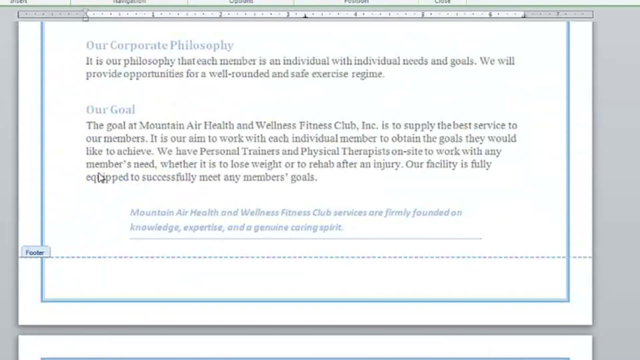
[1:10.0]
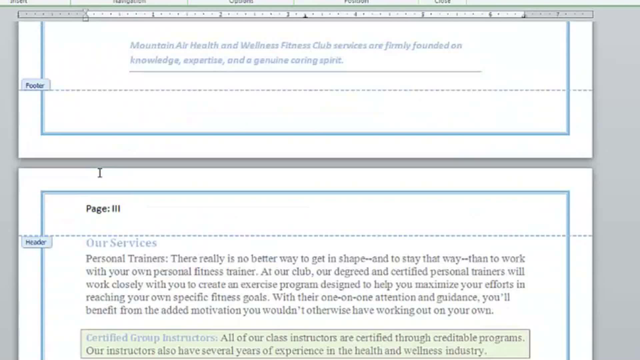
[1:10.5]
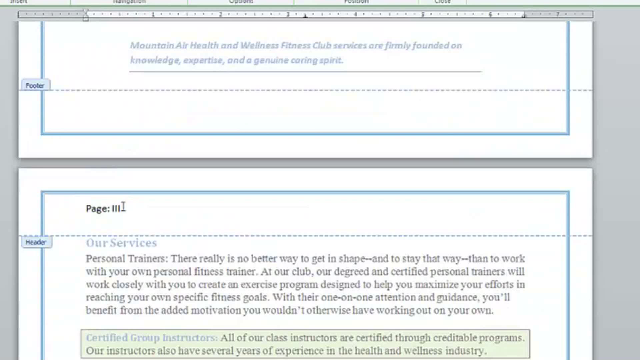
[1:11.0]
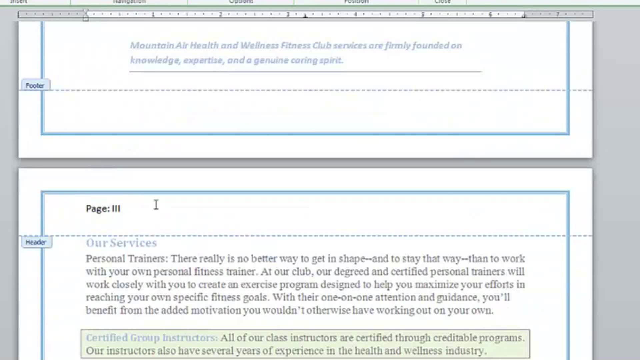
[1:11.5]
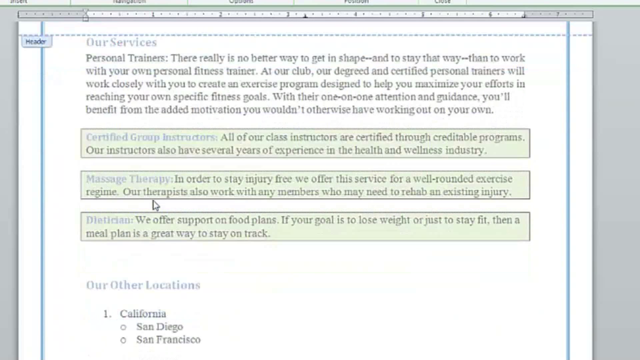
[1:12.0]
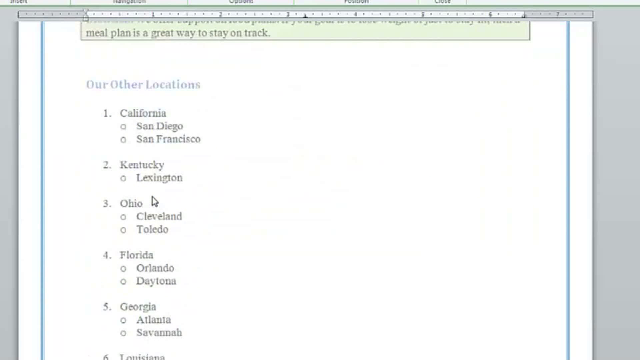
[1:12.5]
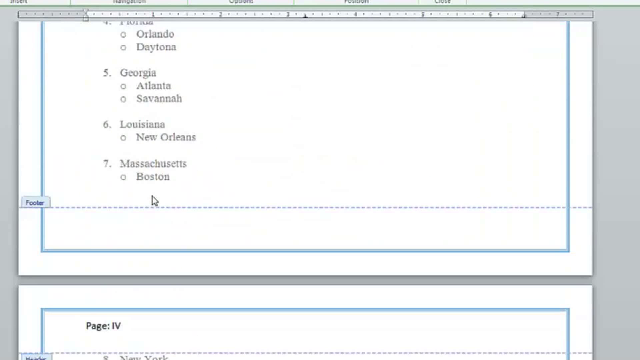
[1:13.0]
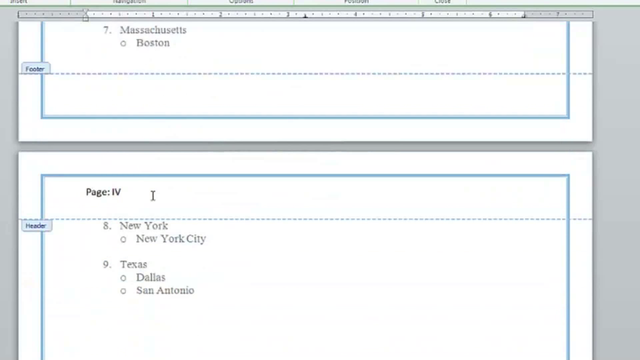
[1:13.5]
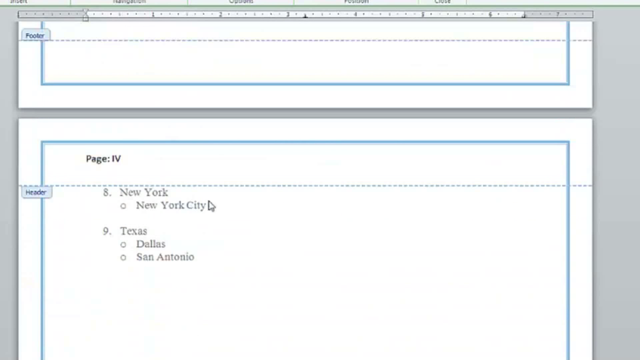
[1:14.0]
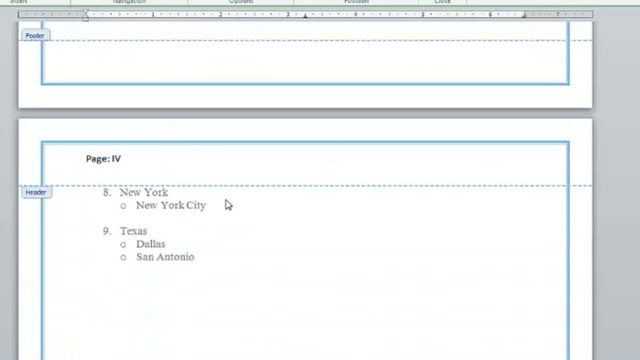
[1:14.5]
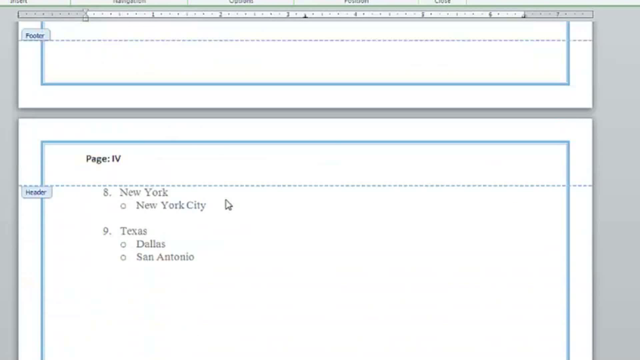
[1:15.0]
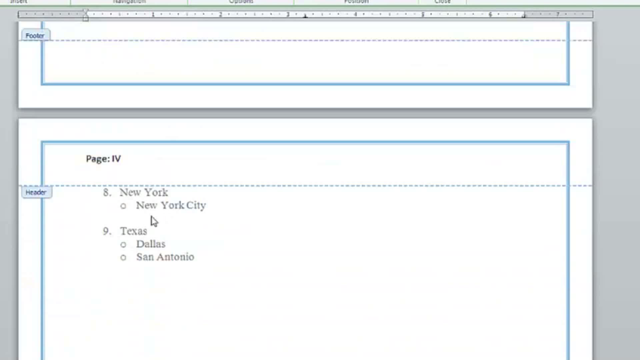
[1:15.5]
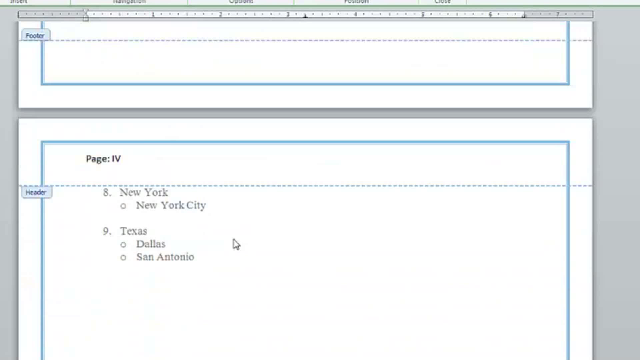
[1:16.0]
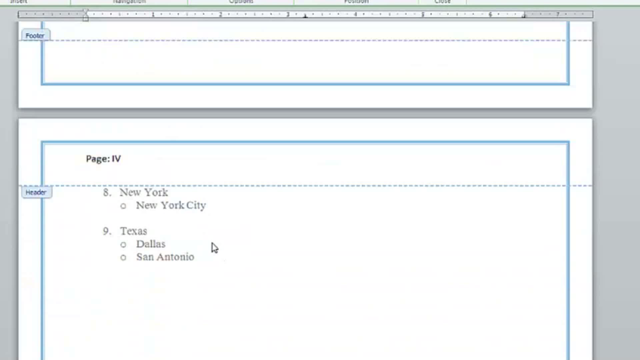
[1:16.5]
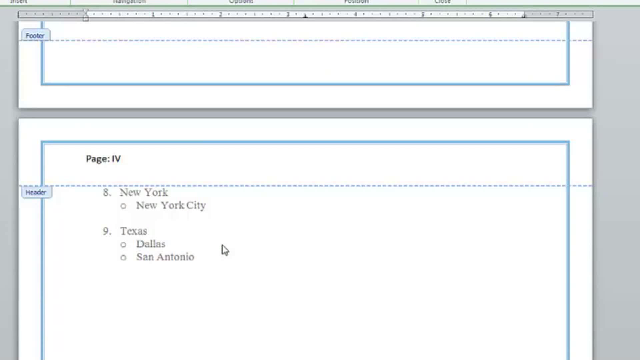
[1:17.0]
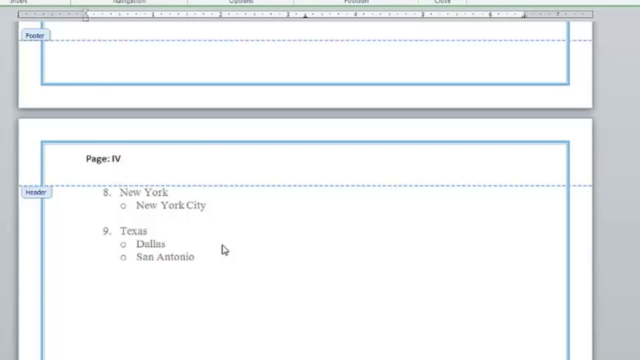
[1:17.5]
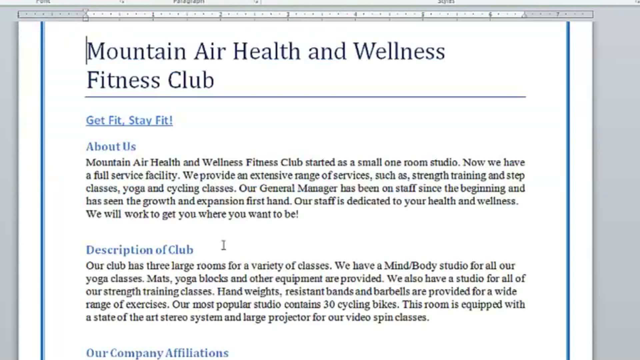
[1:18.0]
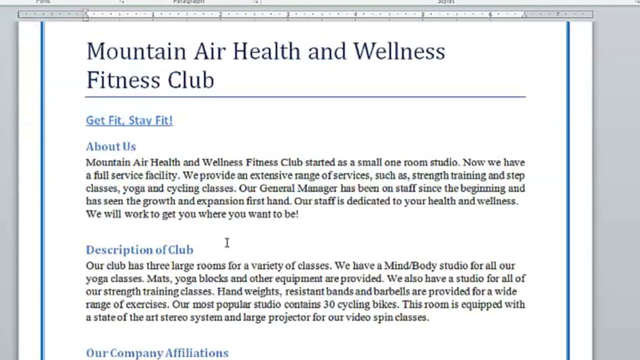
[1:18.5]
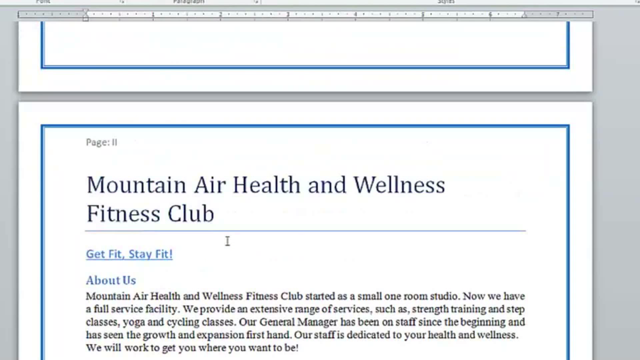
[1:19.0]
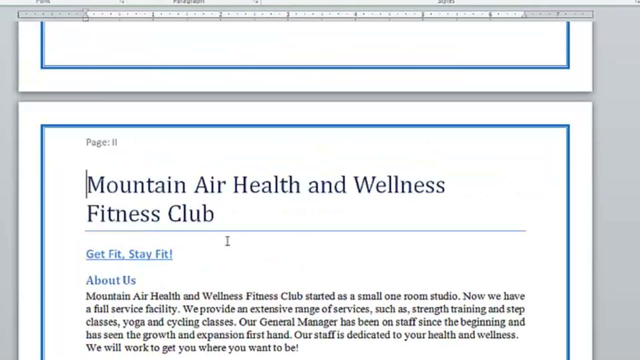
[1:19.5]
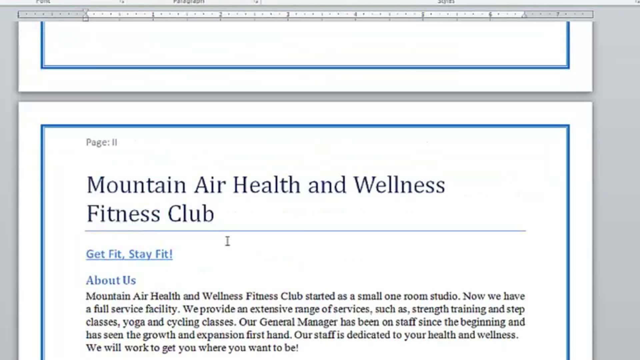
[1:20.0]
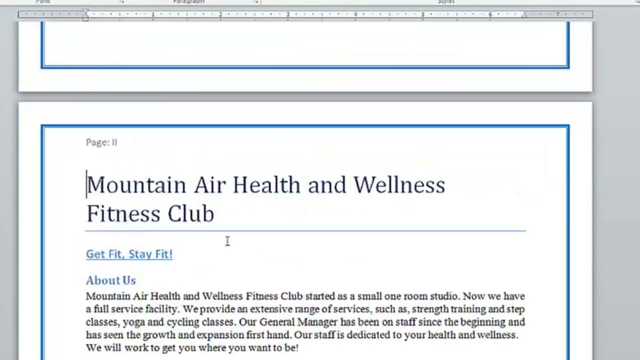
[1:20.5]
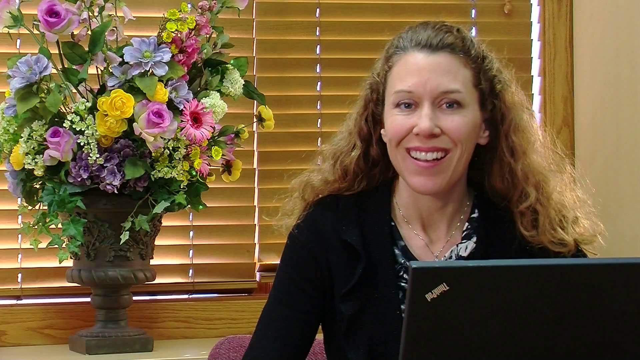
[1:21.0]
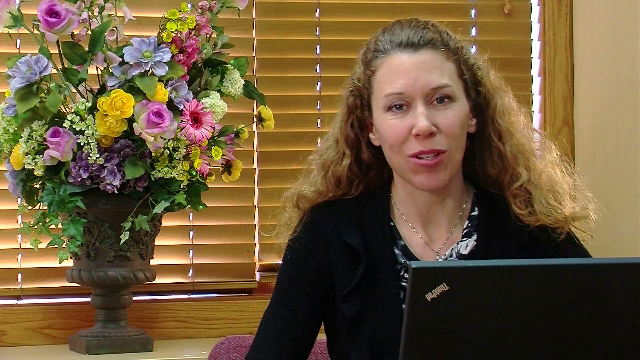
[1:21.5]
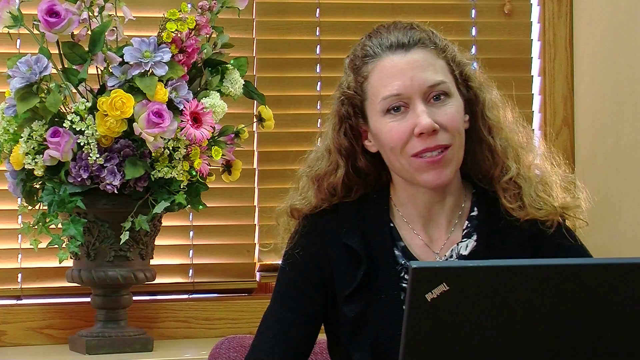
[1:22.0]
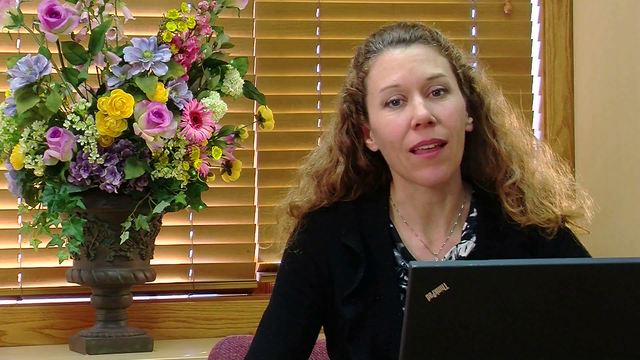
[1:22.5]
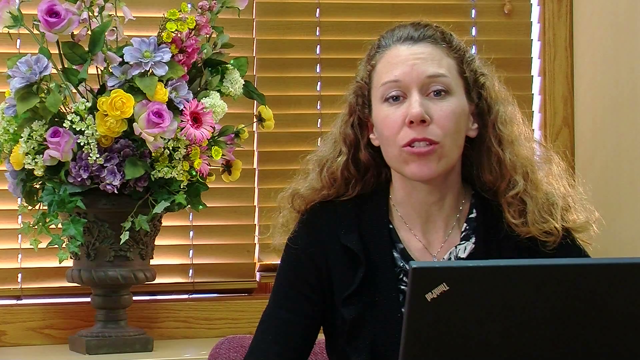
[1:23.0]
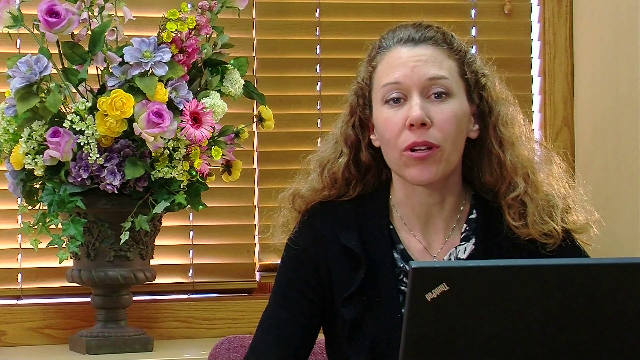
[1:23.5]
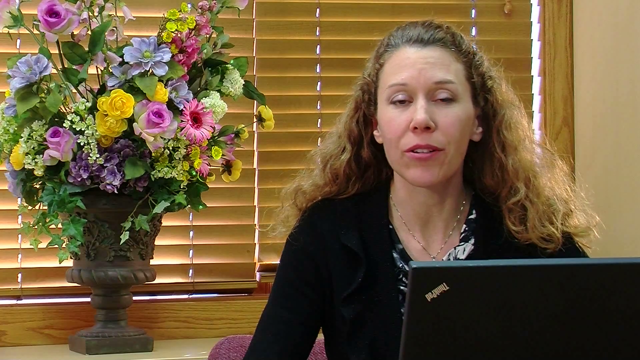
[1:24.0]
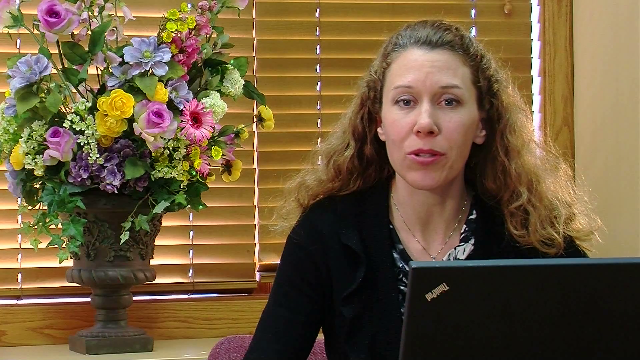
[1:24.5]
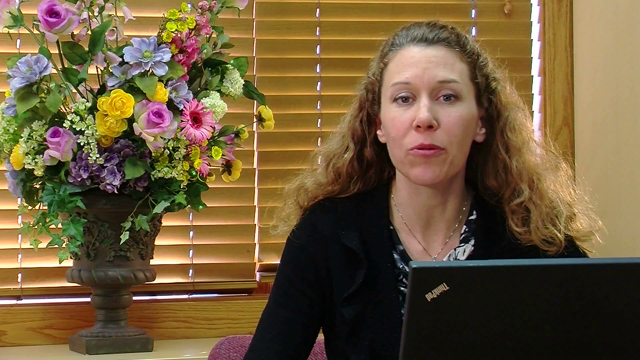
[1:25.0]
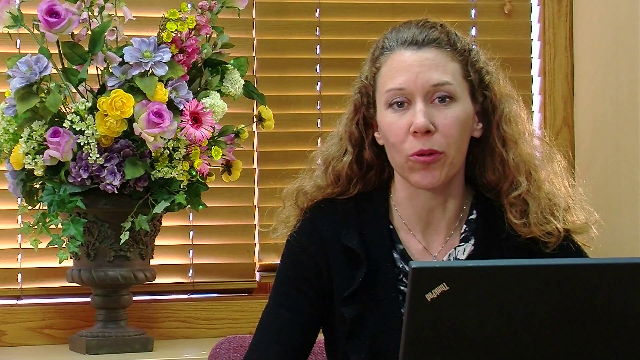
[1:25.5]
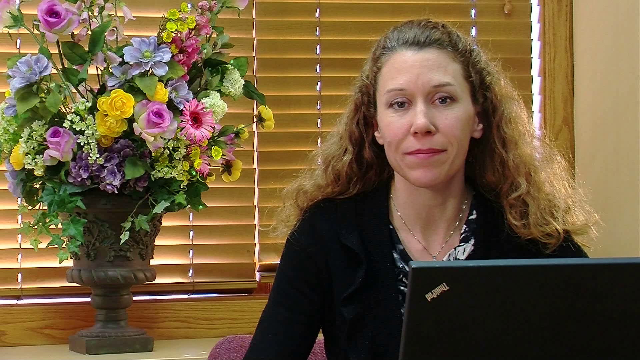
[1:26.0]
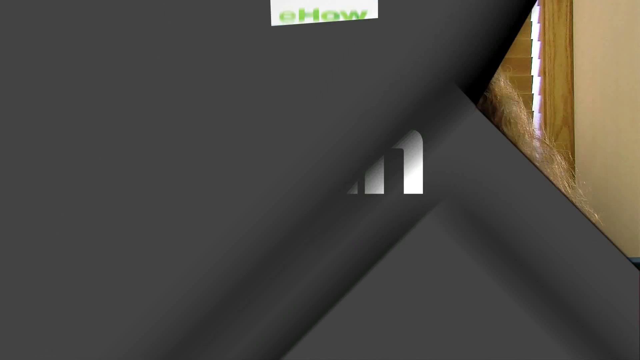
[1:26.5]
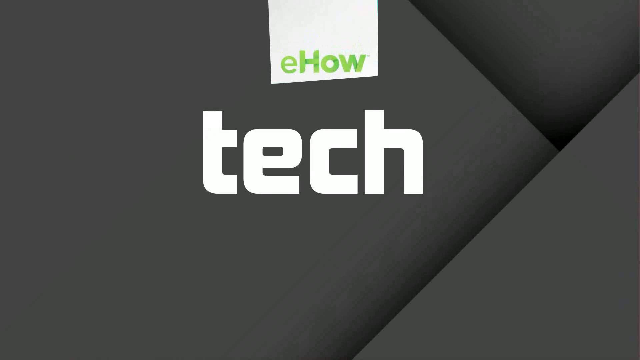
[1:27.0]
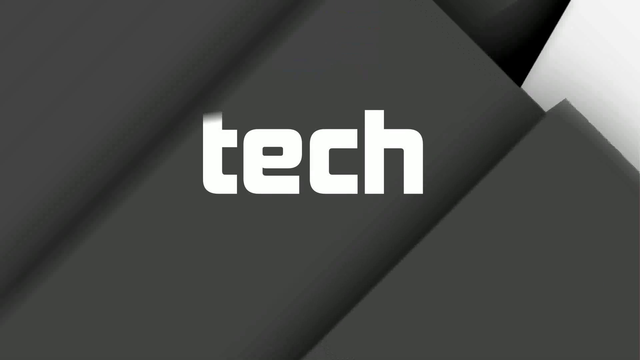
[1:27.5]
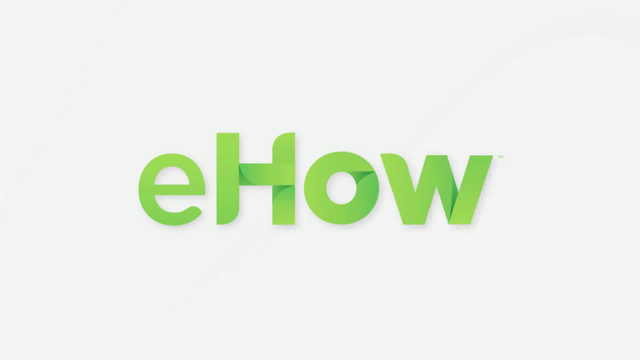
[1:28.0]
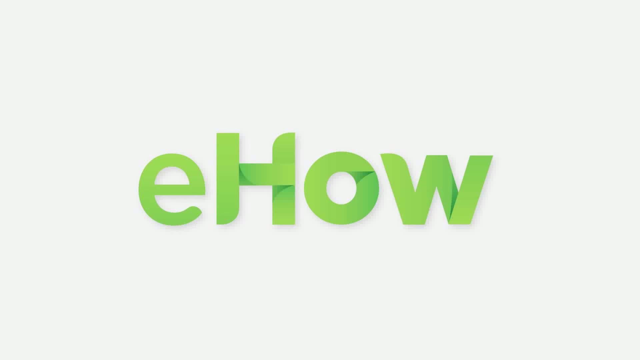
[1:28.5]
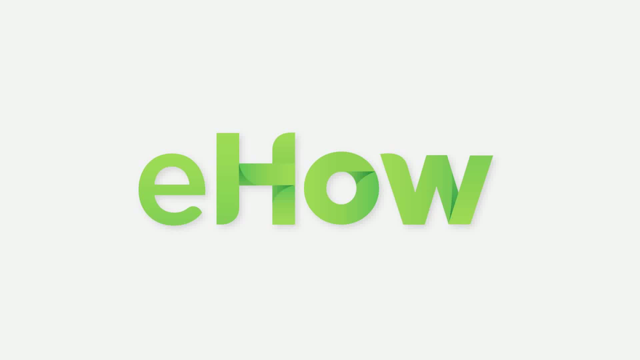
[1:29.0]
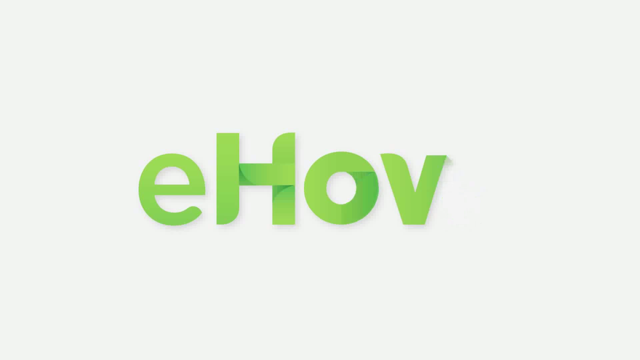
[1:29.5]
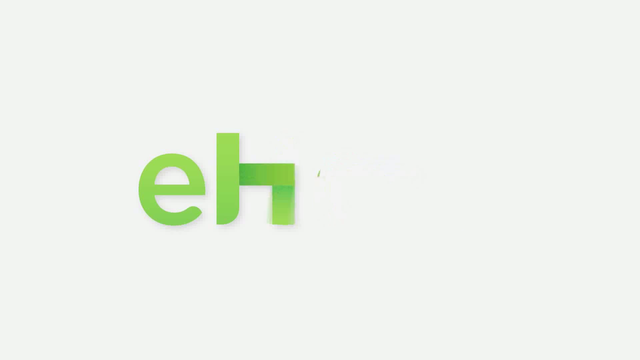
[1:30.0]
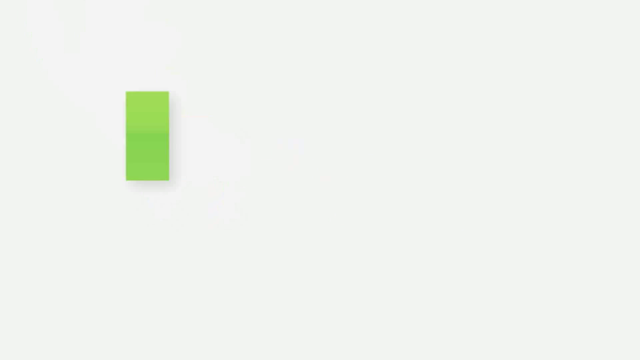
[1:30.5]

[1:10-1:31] The document is on the page, with the page number format changed from the regular number two to the Roman numeral two. The page scrolls up and down, and on each page the numbers are formatted differently than they were to begin with. The video then transitions back to the woman talking directly to the camera. Down to the right of her is an open computer monitor that looks like a laptop monitor. Over to her left is a big vase with a bunch of flowers in it, and behind that is a window covered with closed, wood-colored blinds.